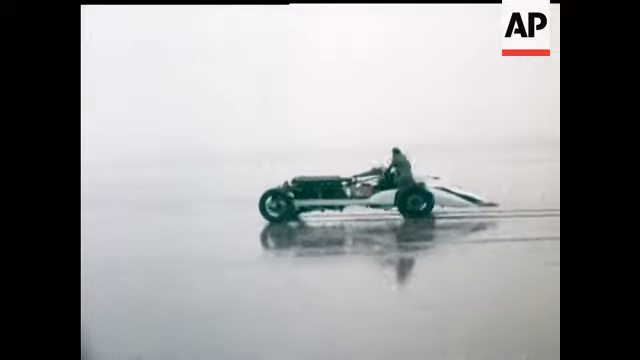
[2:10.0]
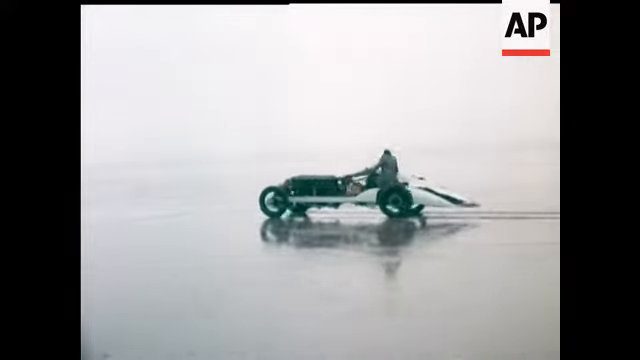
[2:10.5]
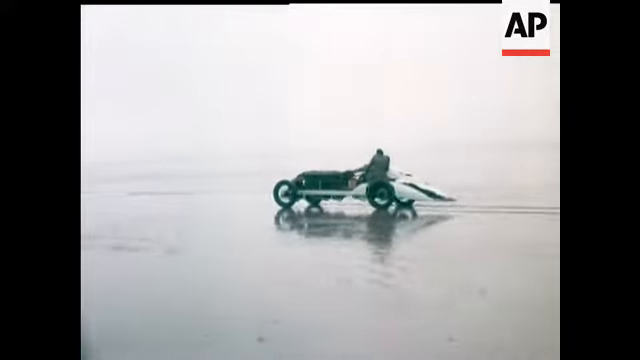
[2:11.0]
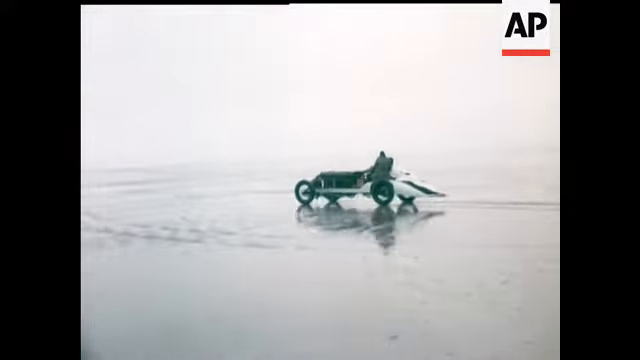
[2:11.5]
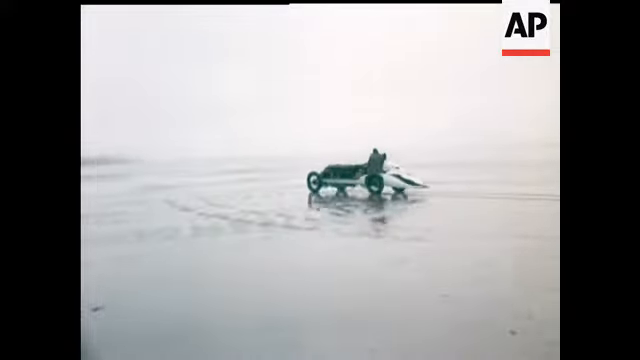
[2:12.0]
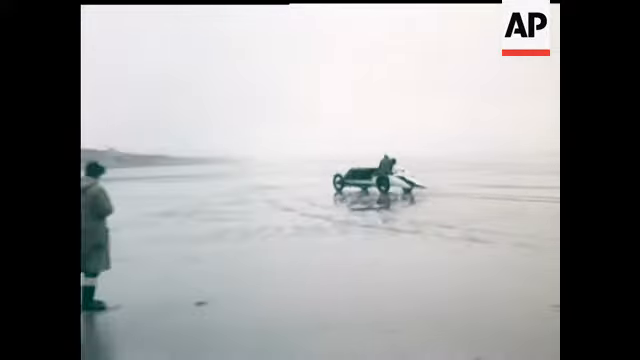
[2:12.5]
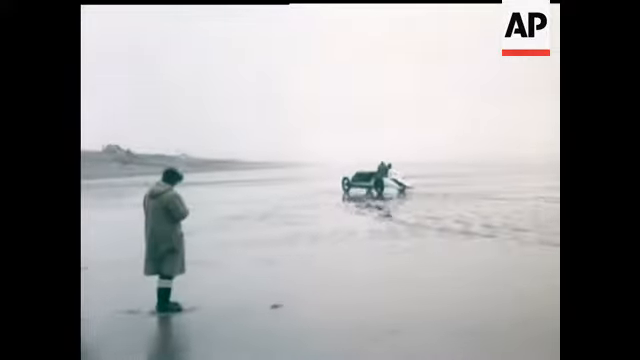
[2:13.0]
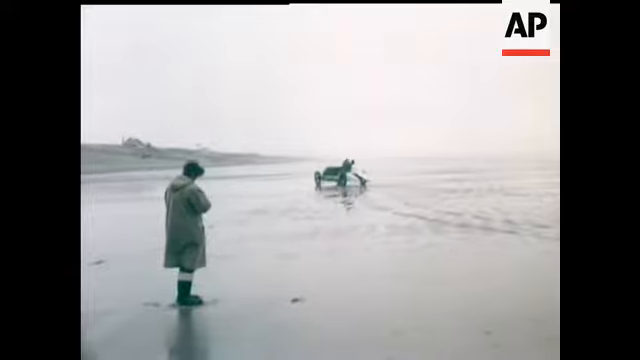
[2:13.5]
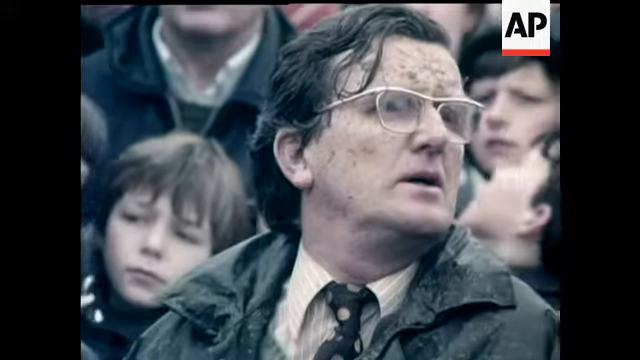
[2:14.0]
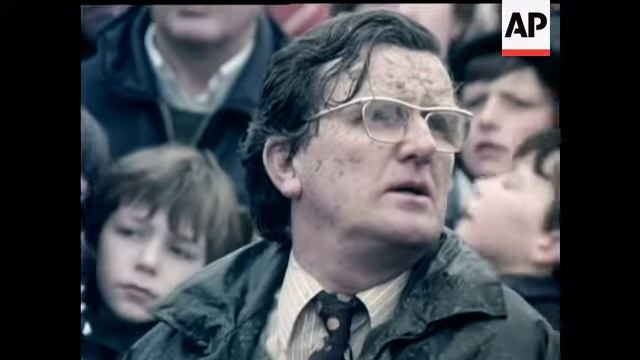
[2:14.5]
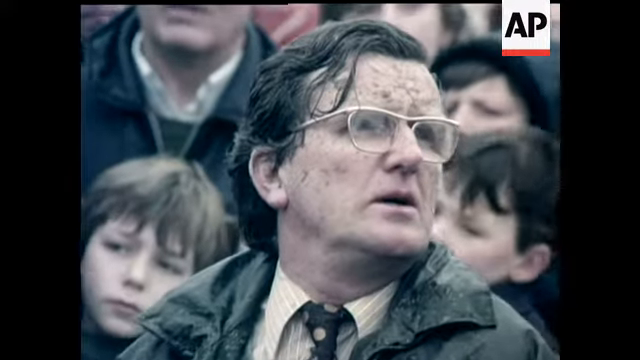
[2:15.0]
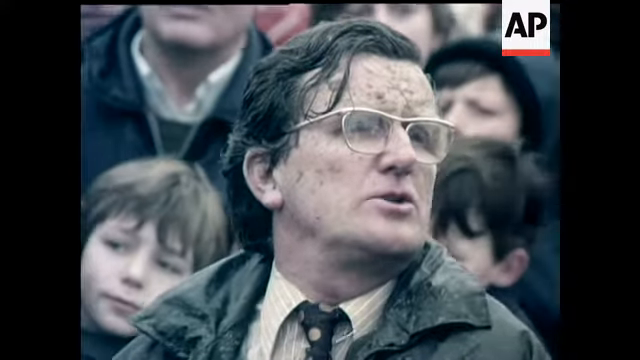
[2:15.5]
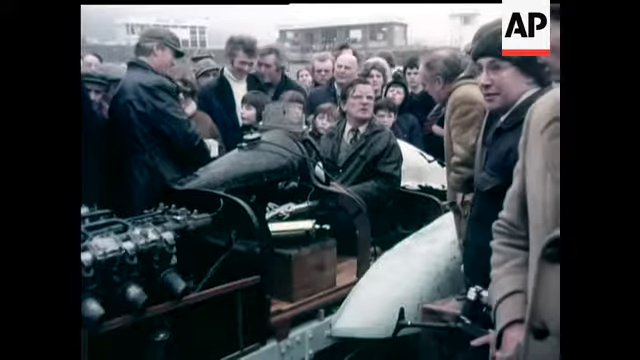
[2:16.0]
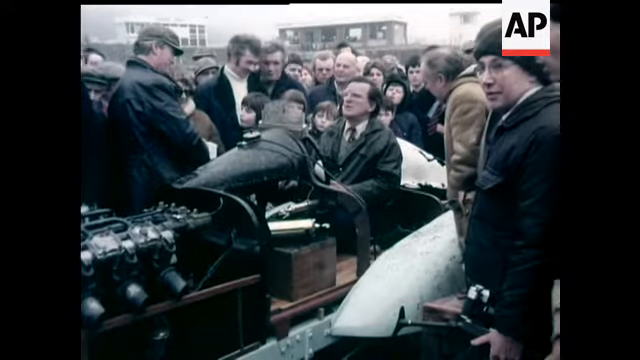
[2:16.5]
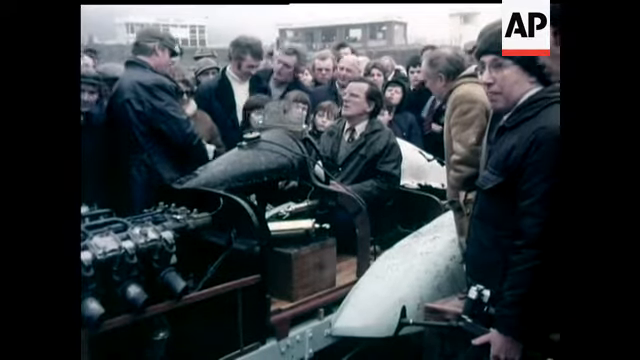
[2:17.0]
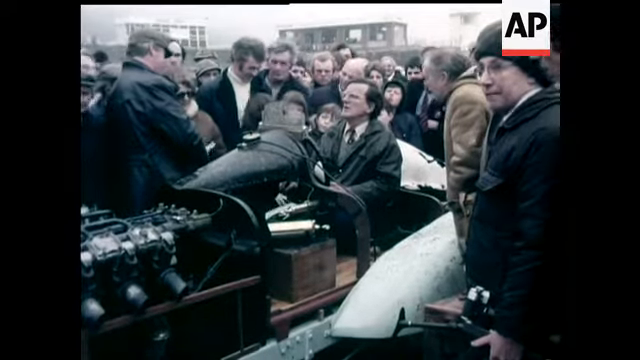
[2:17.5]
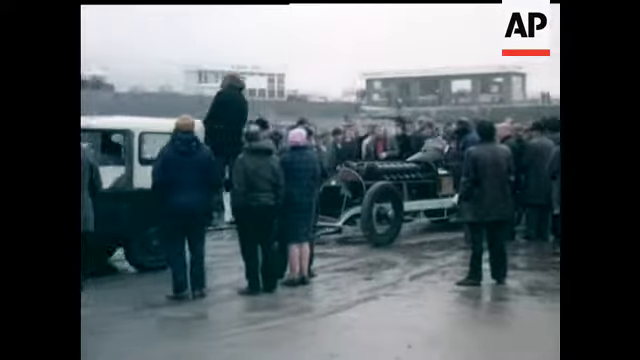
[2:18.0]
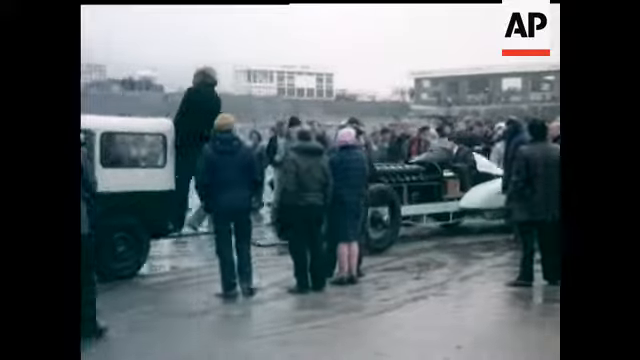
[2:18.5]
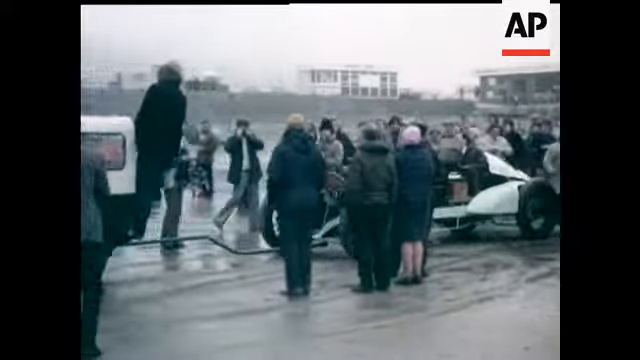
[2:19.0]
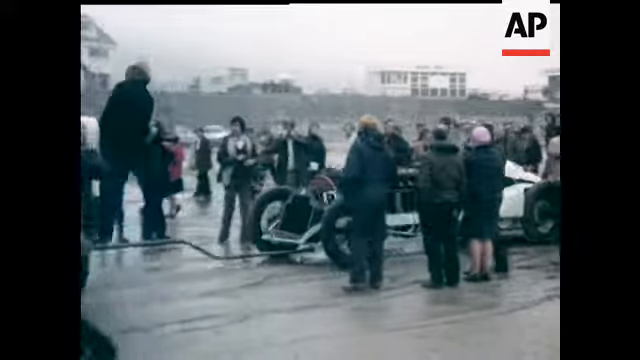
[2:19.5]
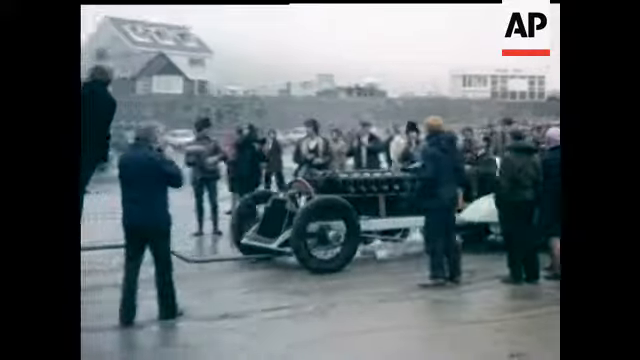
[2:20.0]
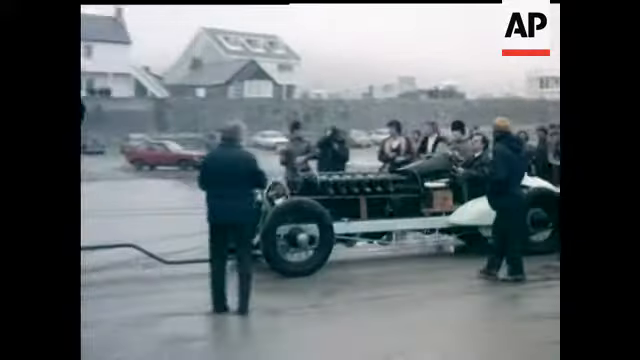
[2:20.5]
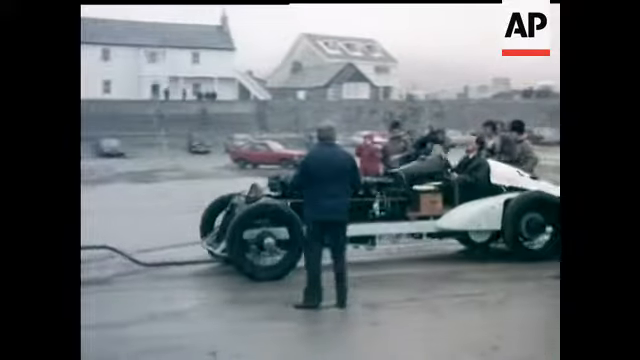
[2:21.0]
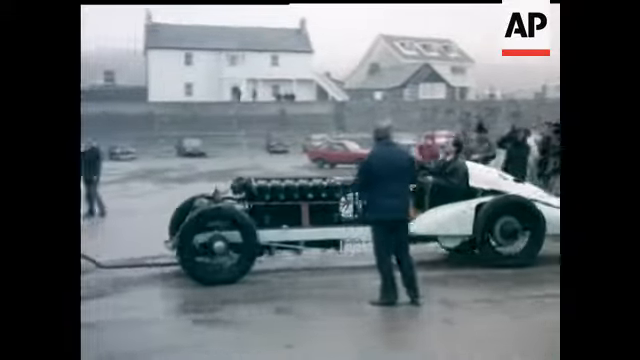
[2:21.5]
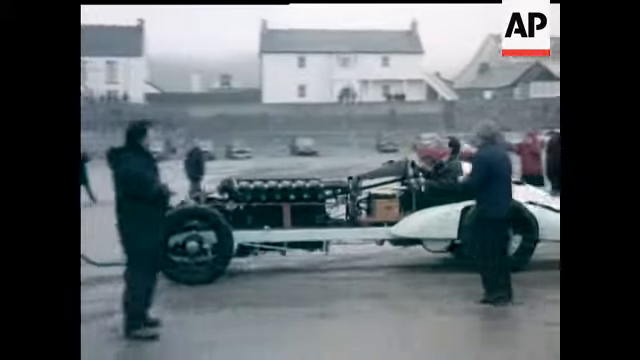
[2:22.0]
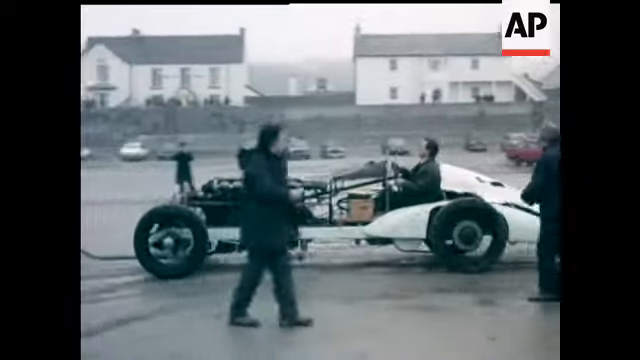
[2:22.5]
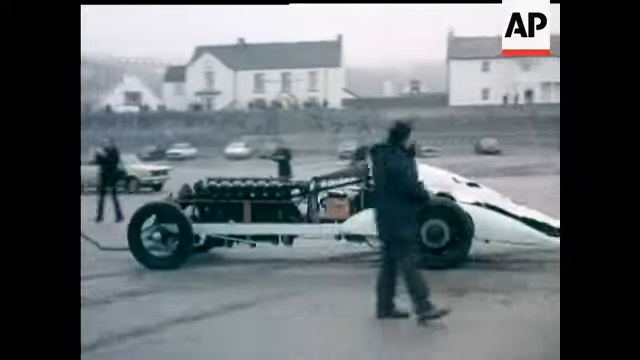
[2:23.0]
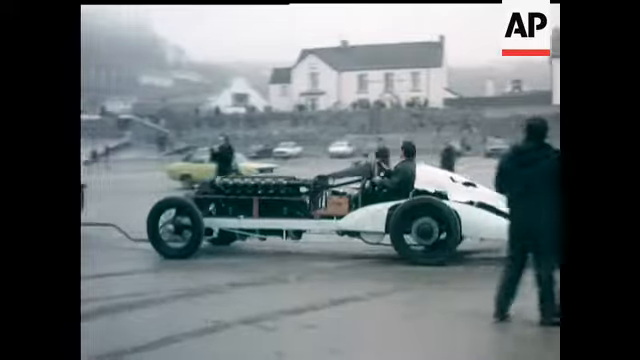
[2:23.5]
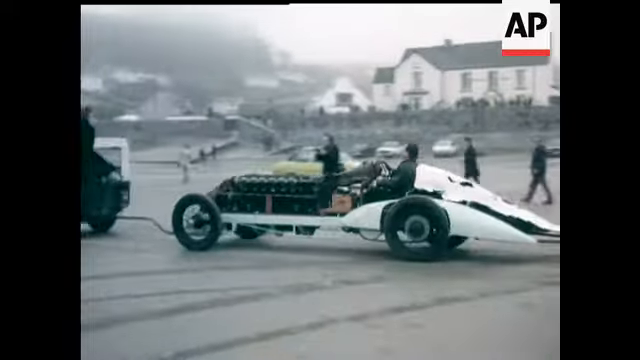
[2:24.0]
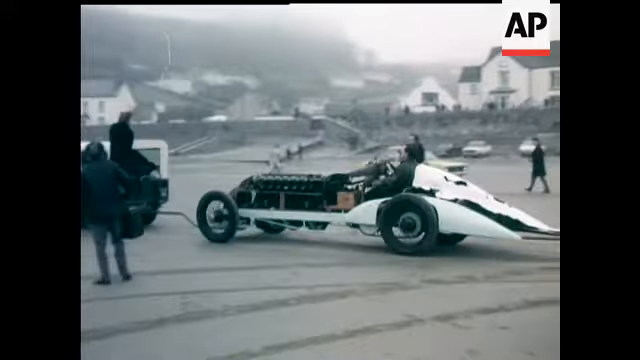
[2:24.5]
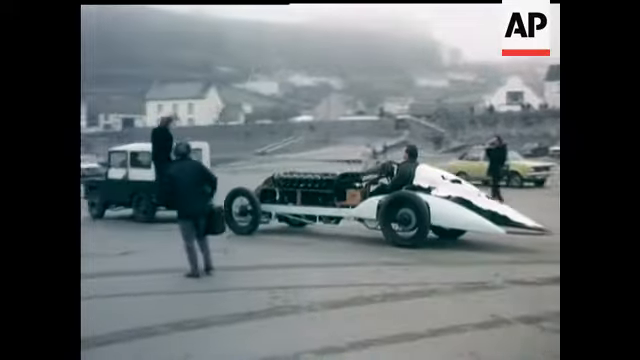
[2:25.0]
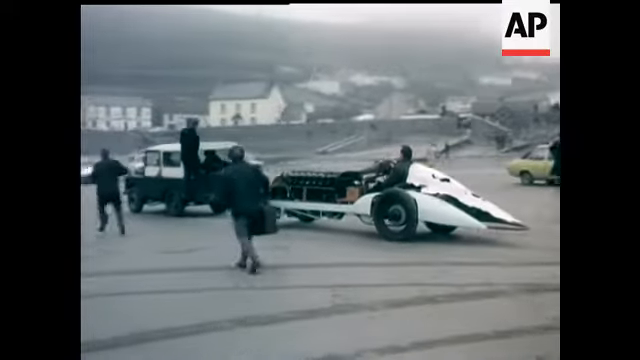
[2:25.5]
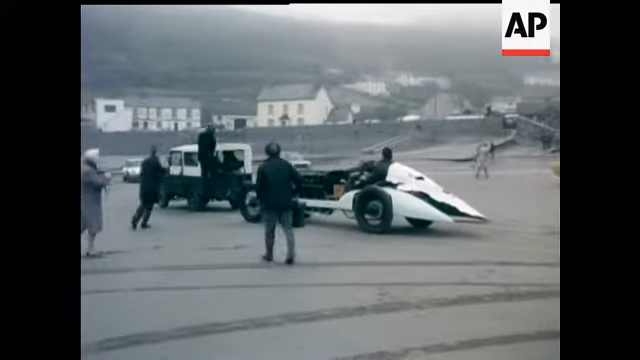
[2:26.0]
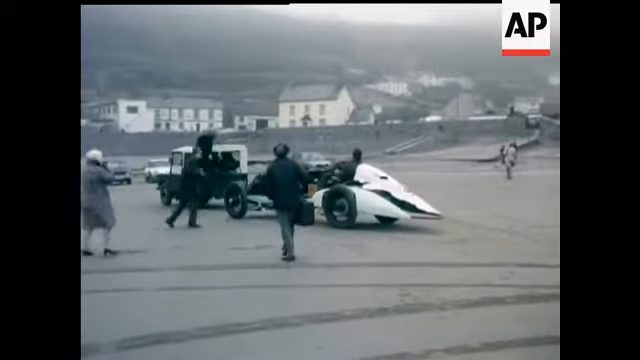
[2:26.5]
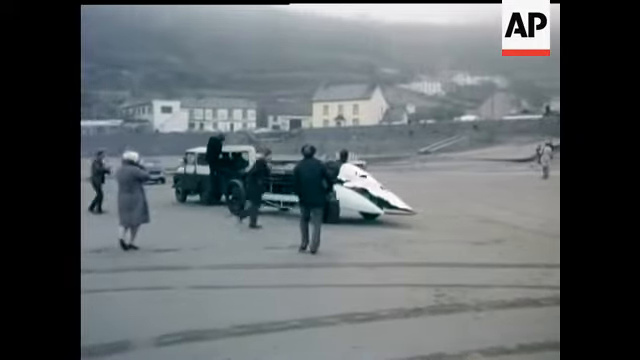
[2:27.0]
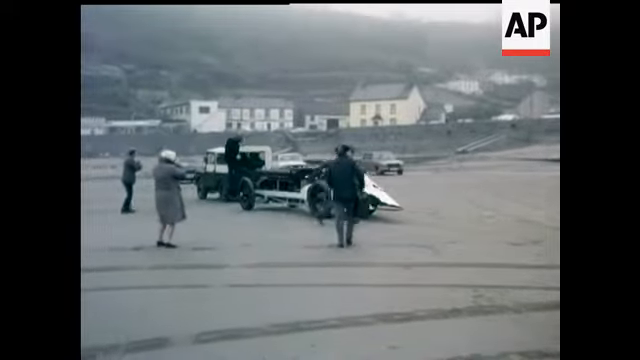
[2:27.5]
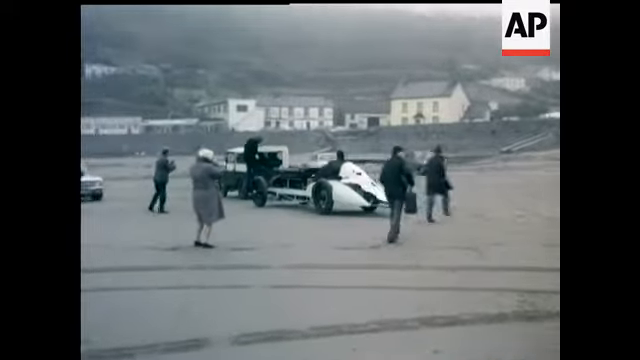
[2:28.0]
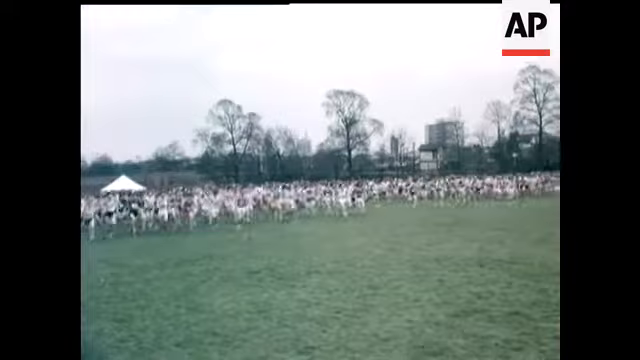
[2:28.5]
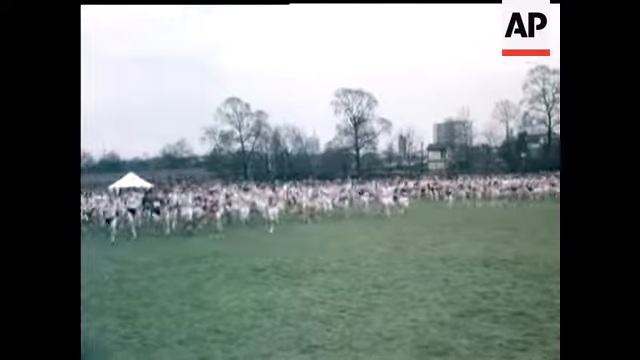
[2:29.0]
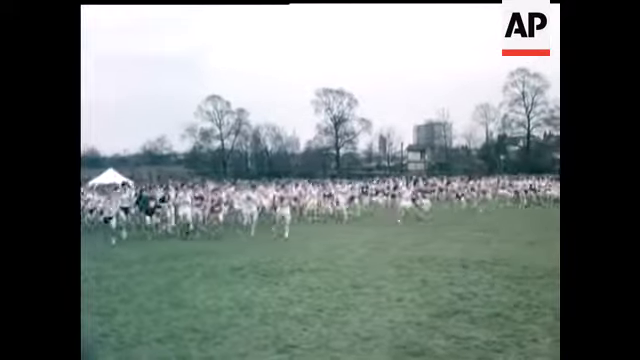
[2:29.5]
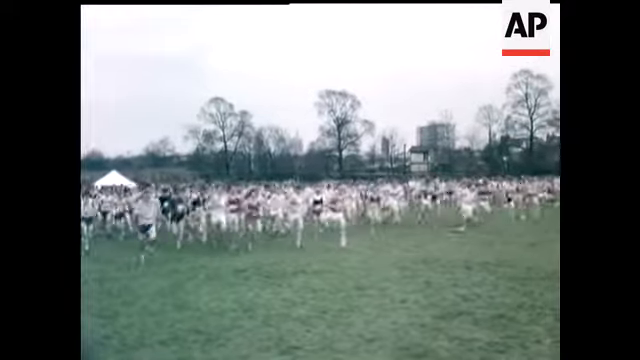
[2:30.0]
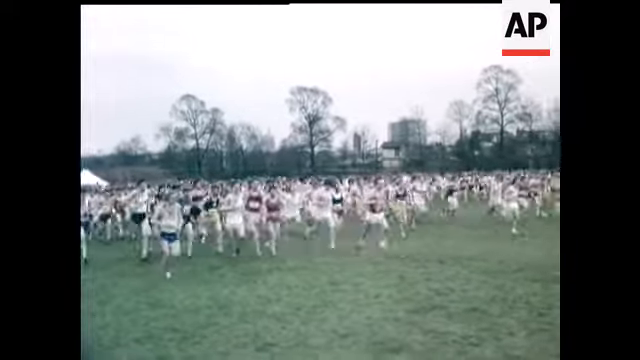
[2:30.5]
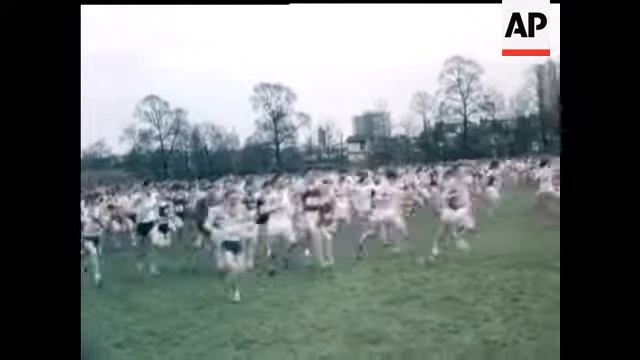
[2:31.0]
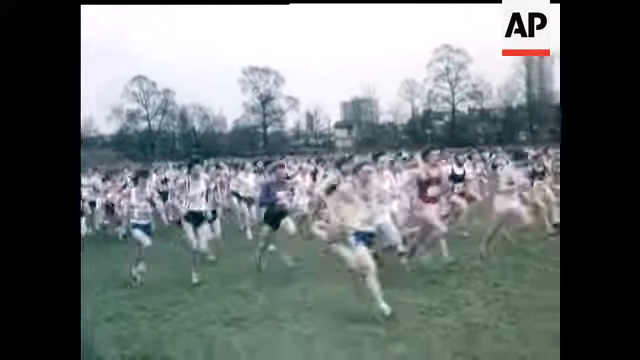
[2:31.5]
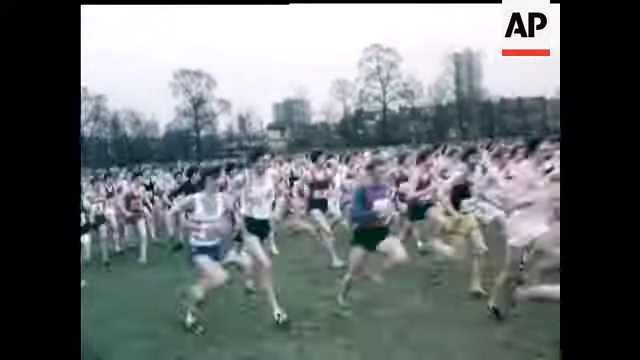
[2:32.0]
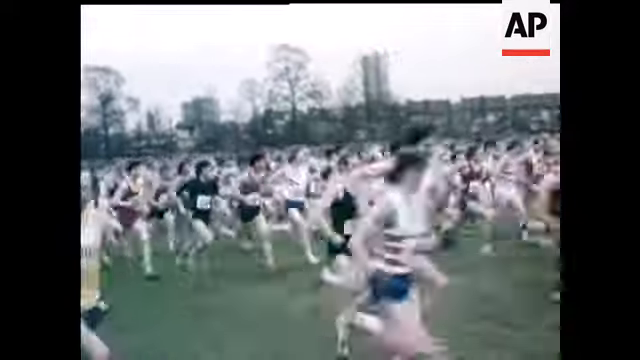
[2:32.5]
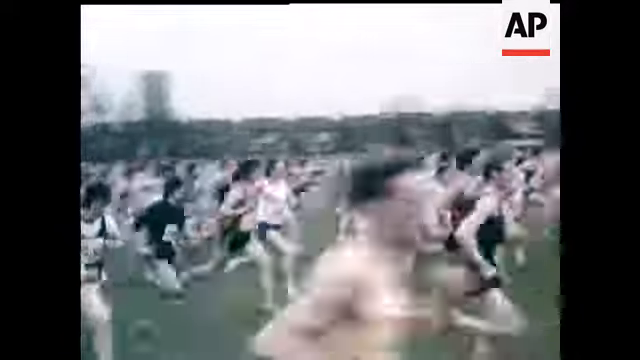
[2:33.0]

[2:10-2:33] The man drives along the shoreline, really close to the water. A close-up shows him with gold-rimmed glasses, short hair, a black and polka dot tie, and a white collared shirt with white stripes. He appears to have wet sand on his face, probably from his drive. He is shown being pulled again in the car by another vehicle, with cottages and two-story houses in the background. It is a foggy day, and there is a barrier between the street and the beach area where the car is being pulled. Next comes a grassy field where a huge number of runners, apparently hundreds, run from the background into the foreground. They wear tank tops of different colors and small shorts, and some have numbers on their chests inside a square. This scene is also in the daytime, with some trees in the background and some buildings off on the horizon.